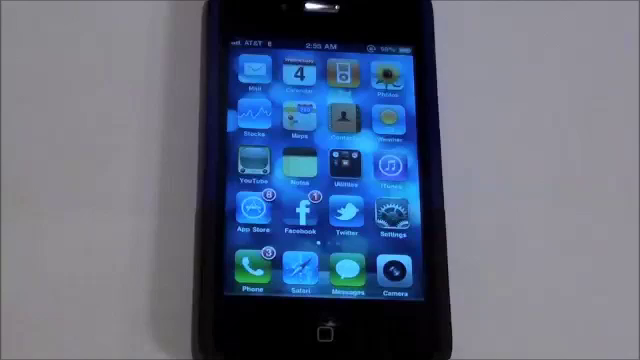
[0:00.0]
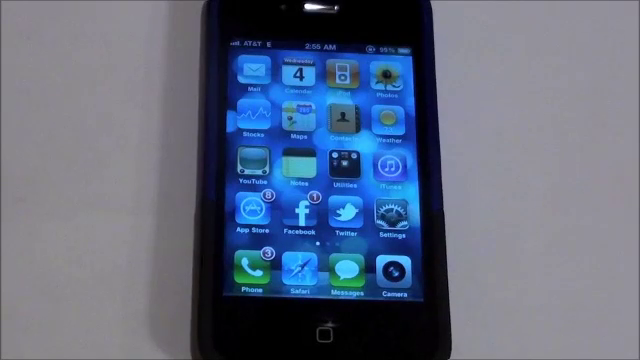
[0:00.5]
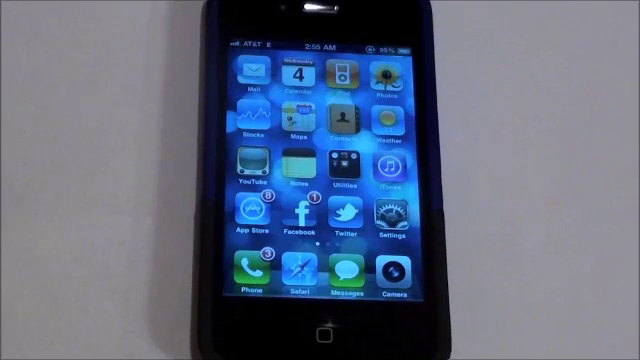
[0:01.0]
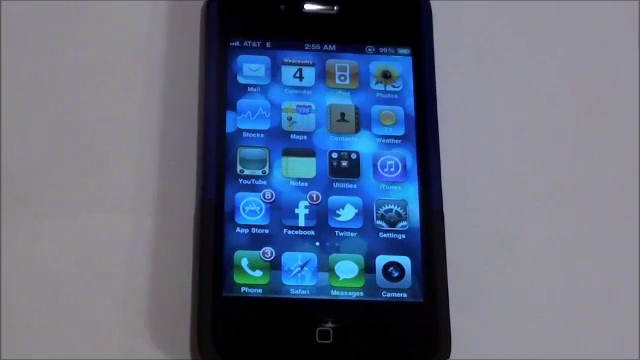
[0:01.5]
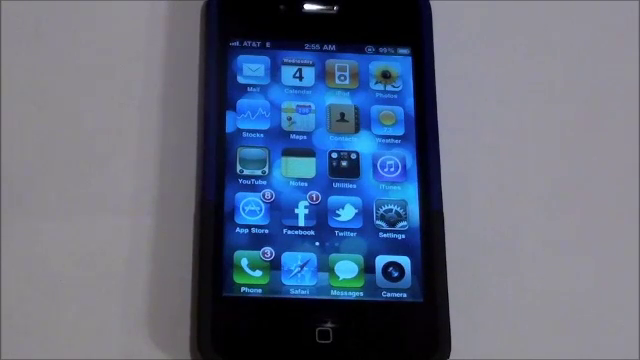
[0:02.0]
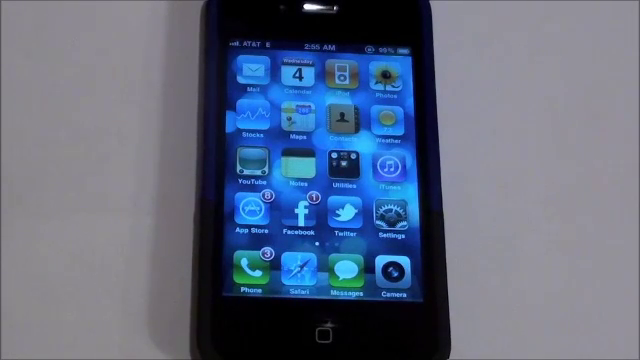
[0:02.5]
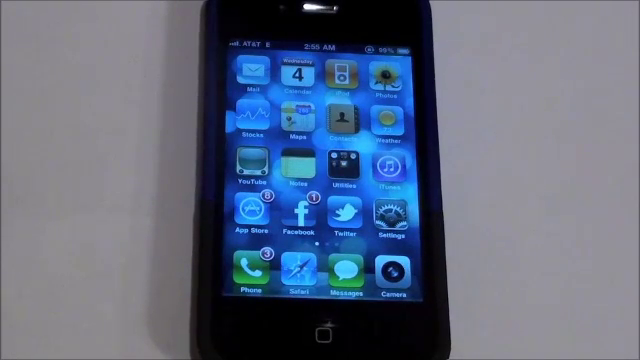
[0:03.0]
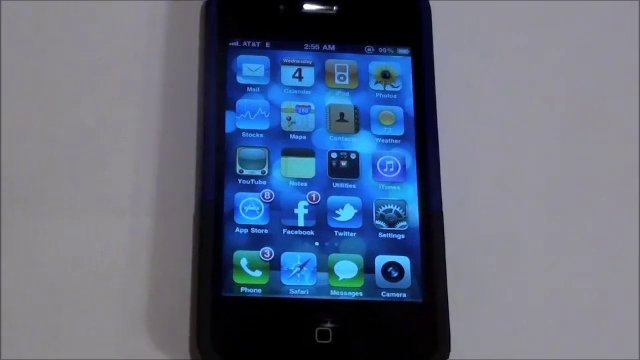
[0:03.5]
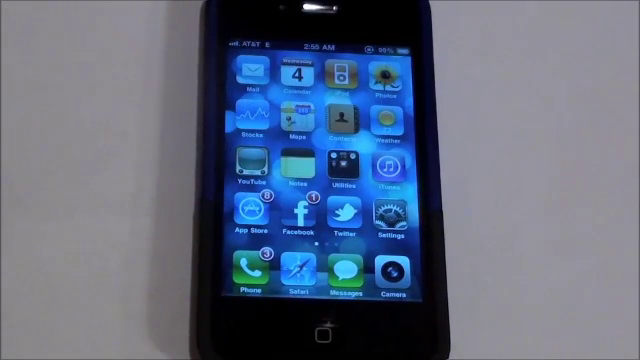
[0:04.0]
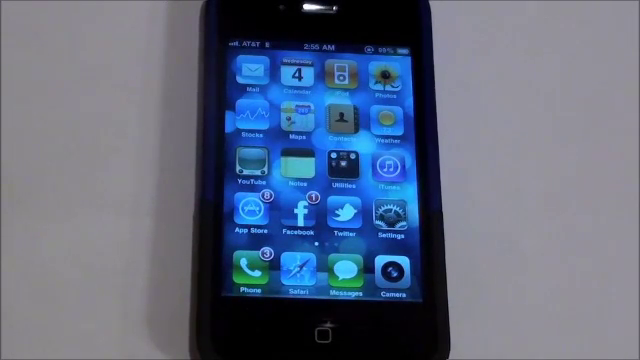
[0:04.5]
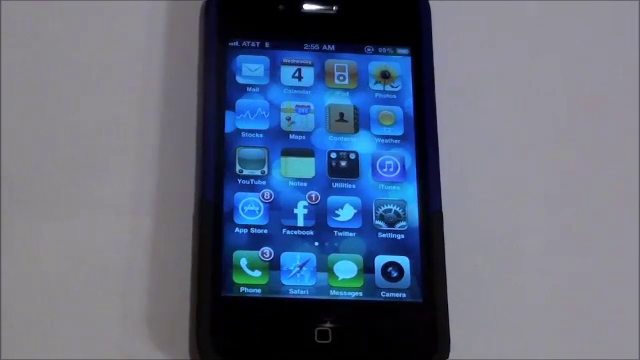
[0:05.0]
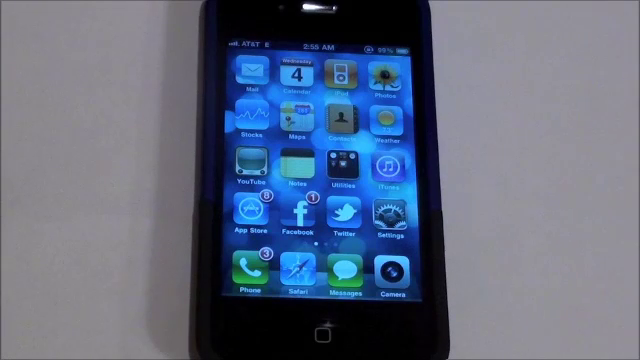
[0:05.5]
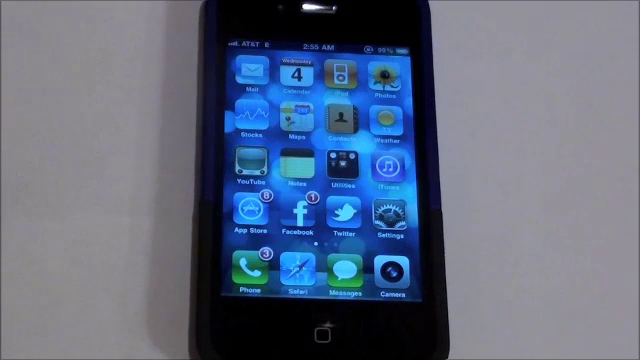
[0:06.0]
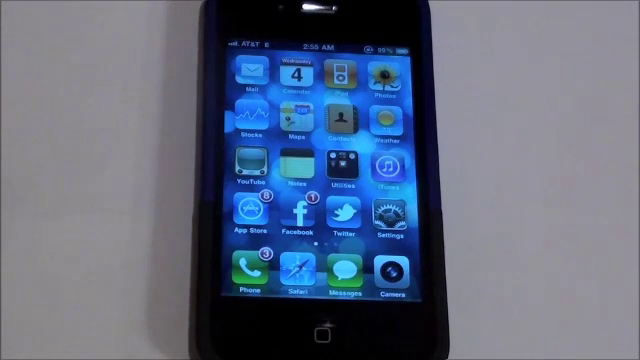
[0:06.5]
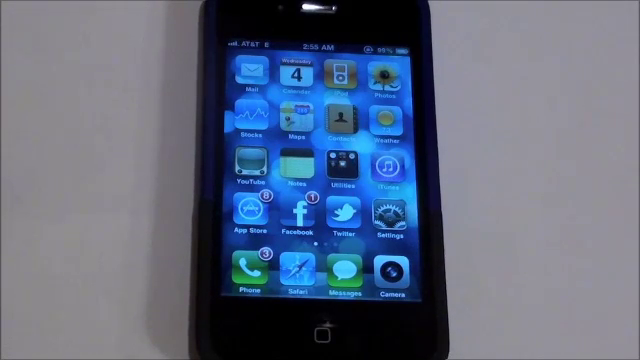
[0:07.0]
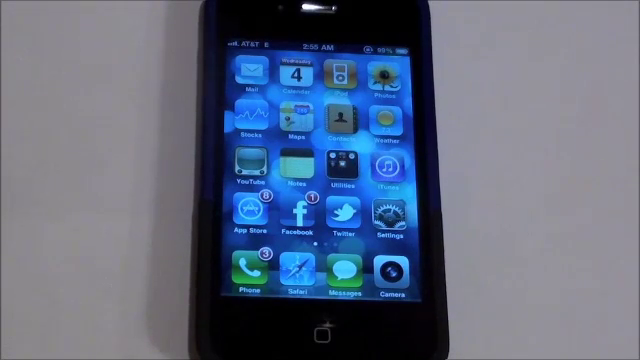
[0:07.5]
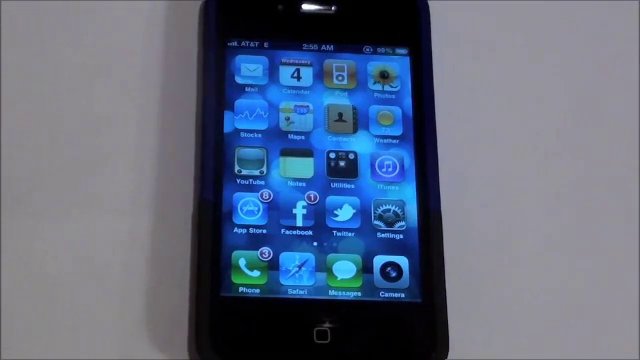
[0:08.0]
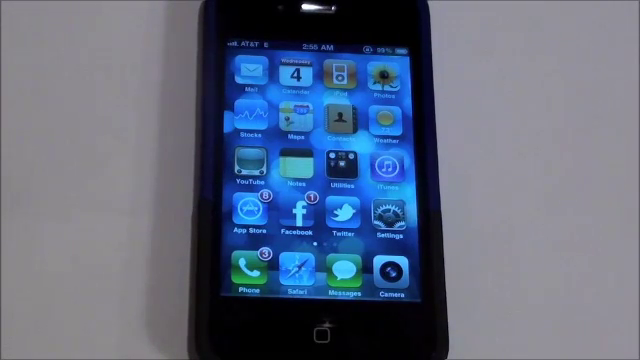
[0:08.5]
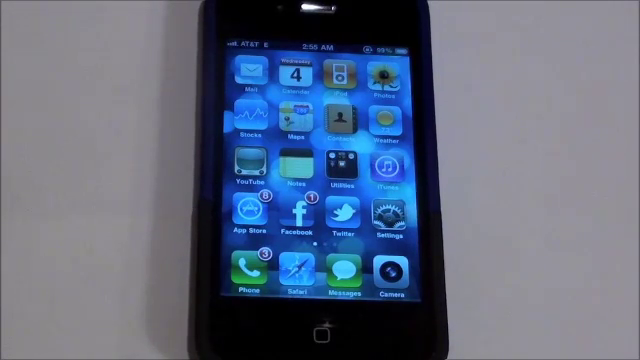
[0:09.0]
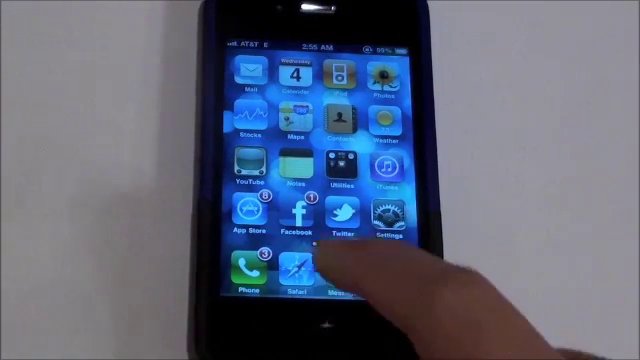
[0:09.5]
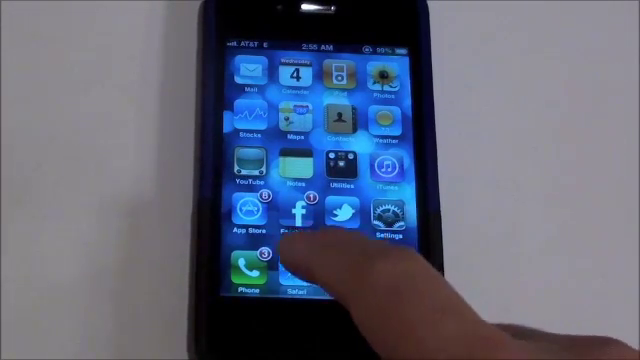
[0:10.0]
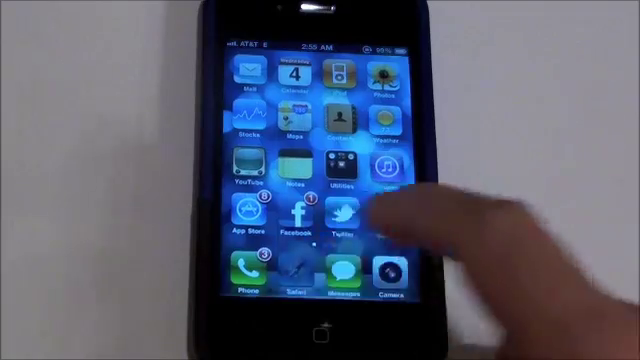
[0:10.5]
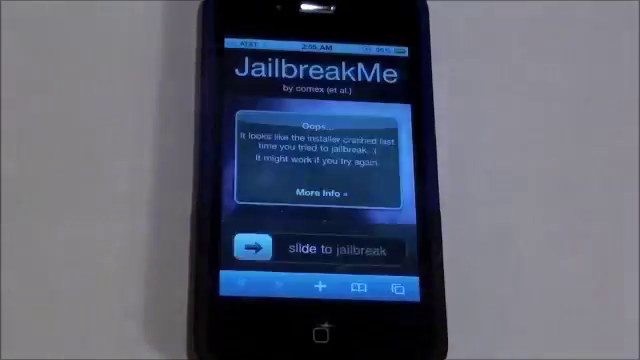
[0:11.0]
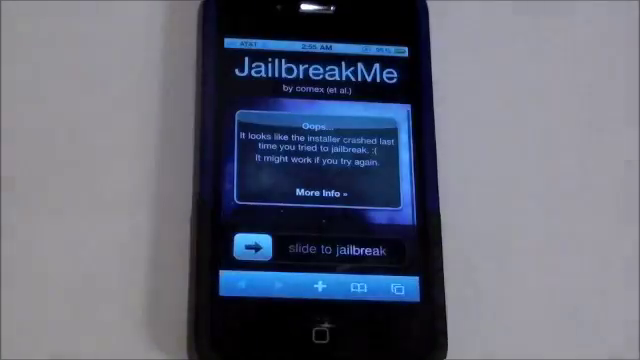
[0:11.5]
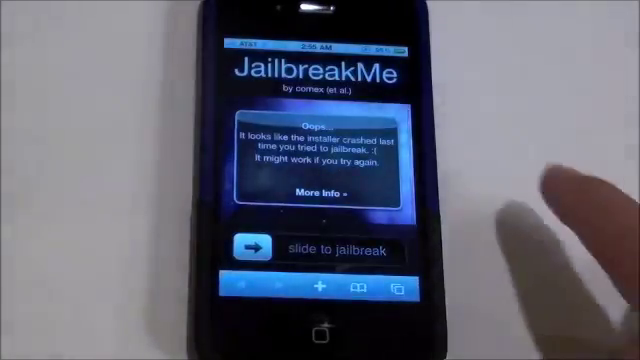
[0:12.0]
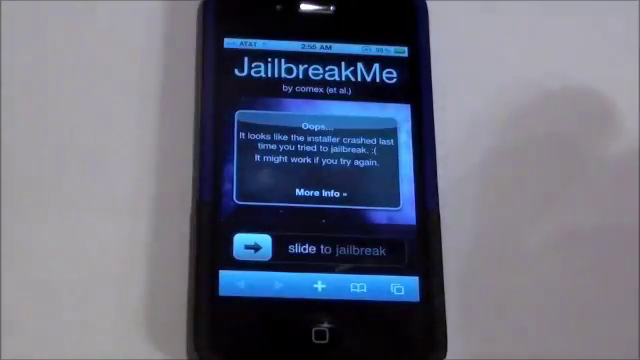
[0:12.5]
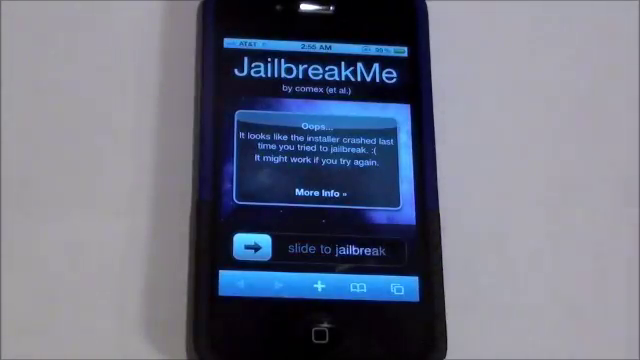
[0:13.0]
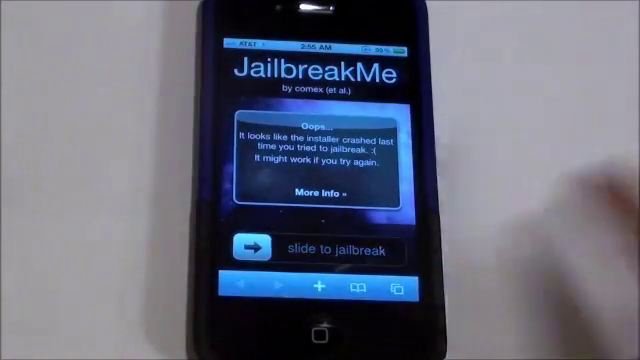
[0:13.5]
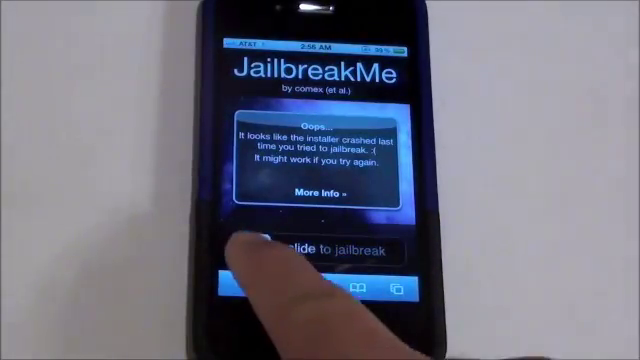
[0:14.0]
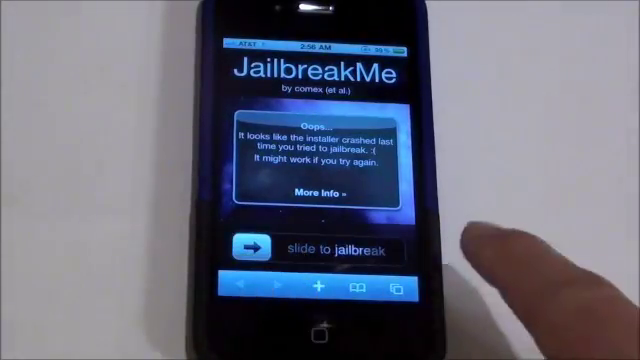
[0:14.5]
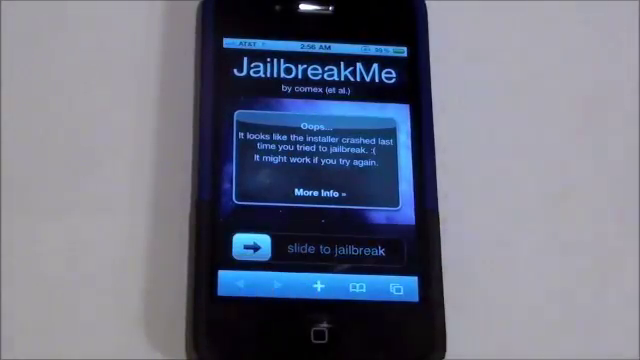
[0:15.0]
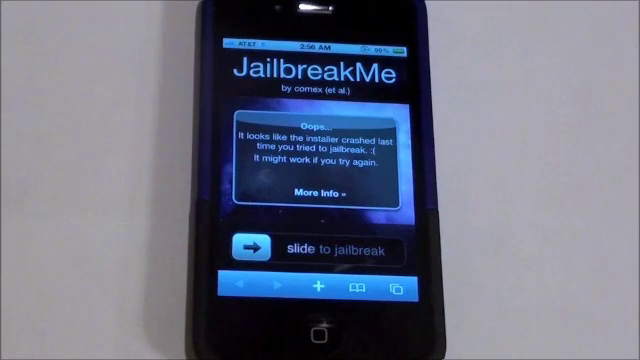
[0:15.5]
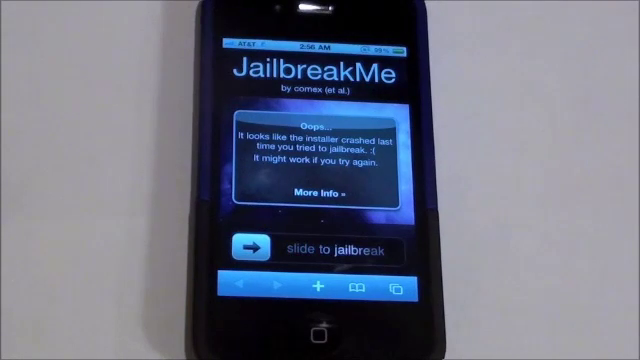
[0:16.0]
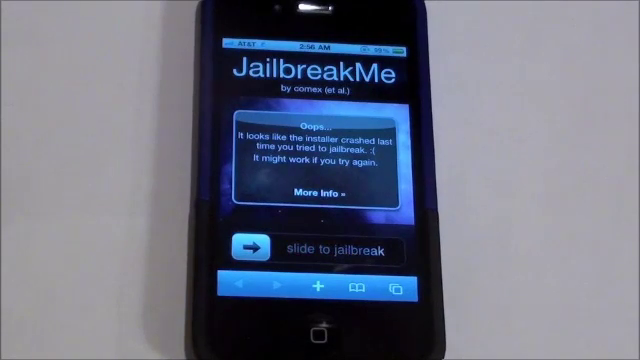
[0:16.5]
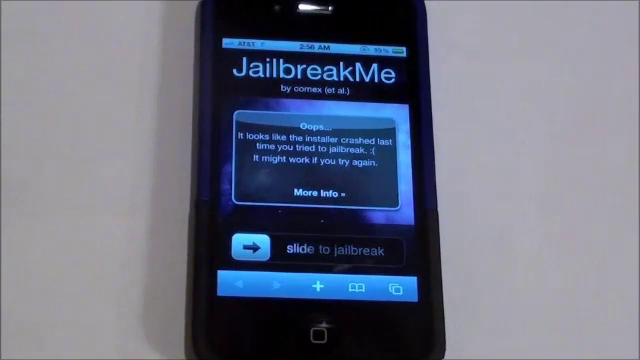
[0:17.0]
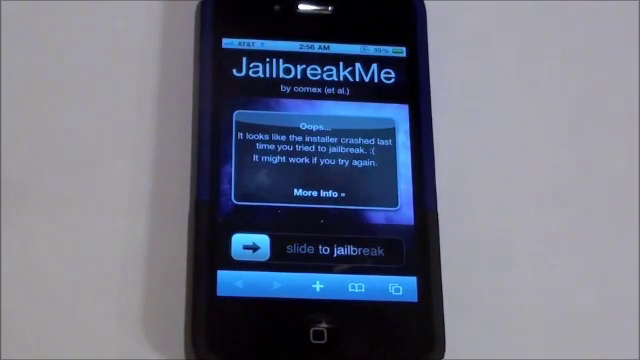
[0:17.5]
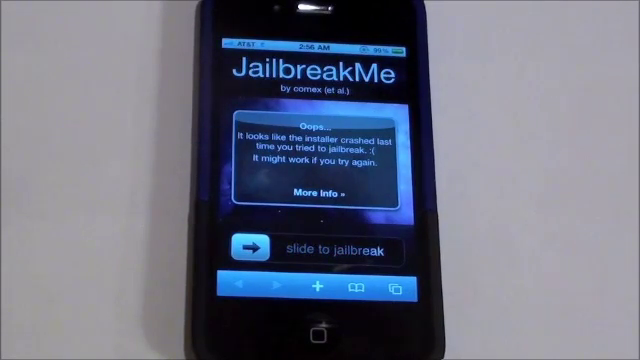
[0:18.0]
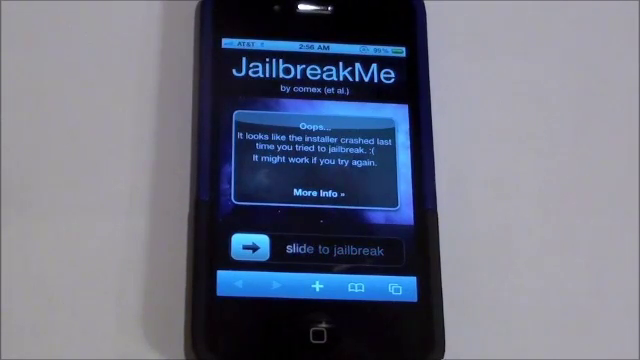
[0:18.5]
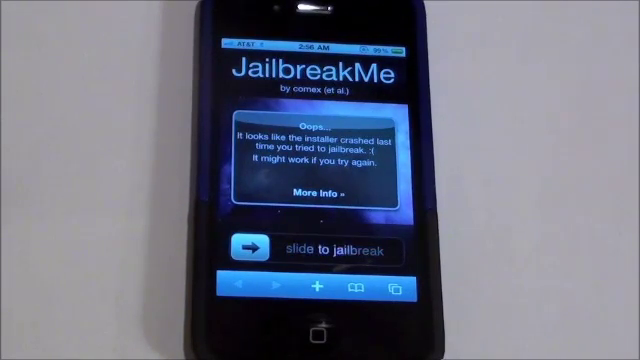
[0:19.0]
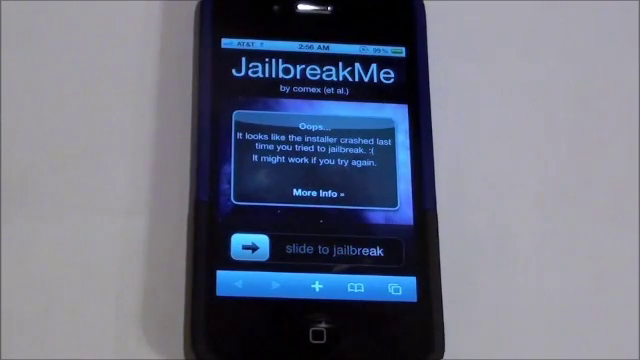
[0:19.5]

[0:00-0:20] A cell phone is centered on a light gray background and stays on screen. Its display has a blue background with a number of clearly visible icons, including mail, calendar and photos; several others are illegible. There is also an app store icon, Facebook, Twitter, a settings icon, a phone, Safari, messages and camera. A finger, apparently a right finger, comes into the frame and touches one of the icons, and "Jailbreak me" appears across the top of the screen, followed by an oops frame. The person mimics sliding to jailbreak with the finger, though the finger does not touch the phone. The finger and the phone cast shadows across the surface, and the hand's shadow moves across the screen as the hand moves away from the phone.